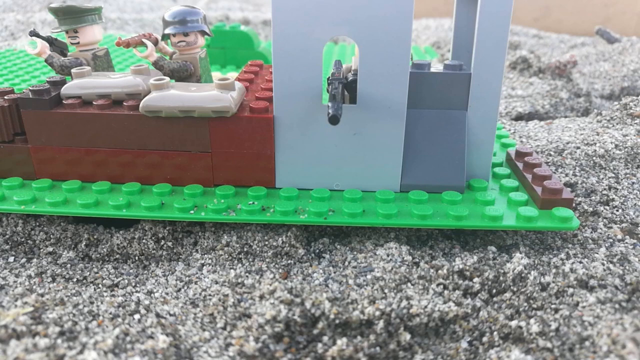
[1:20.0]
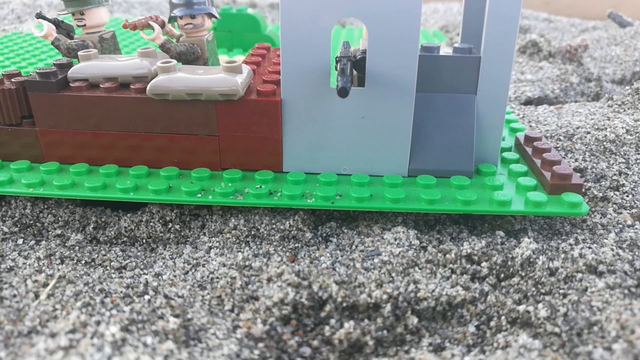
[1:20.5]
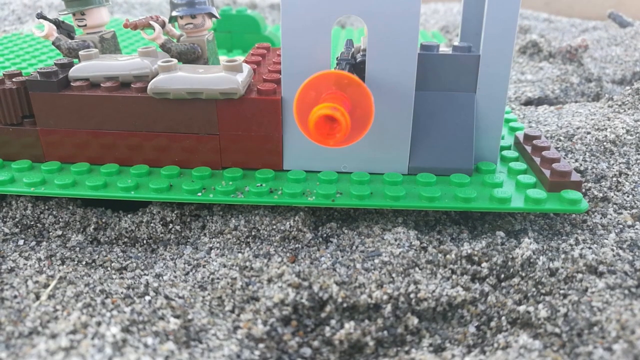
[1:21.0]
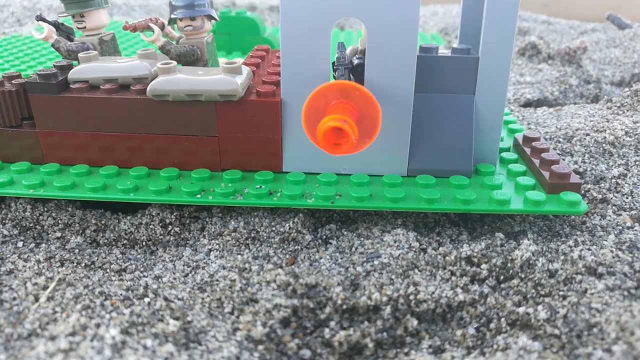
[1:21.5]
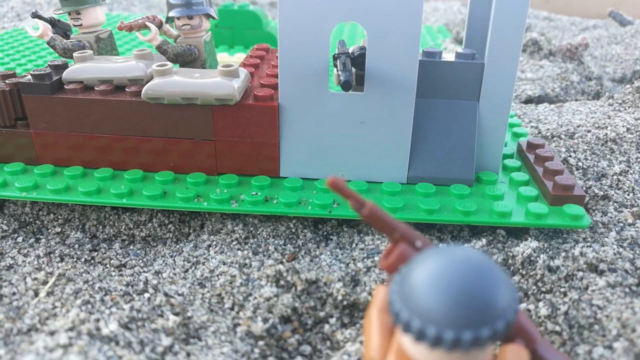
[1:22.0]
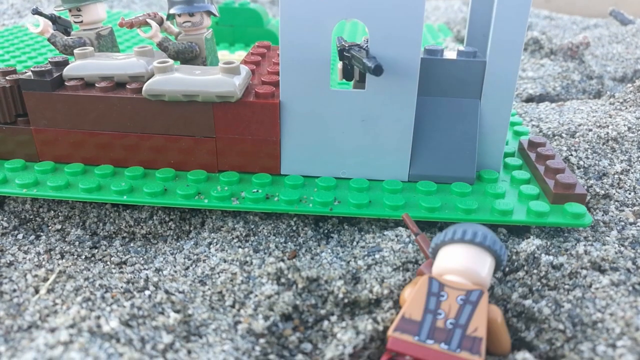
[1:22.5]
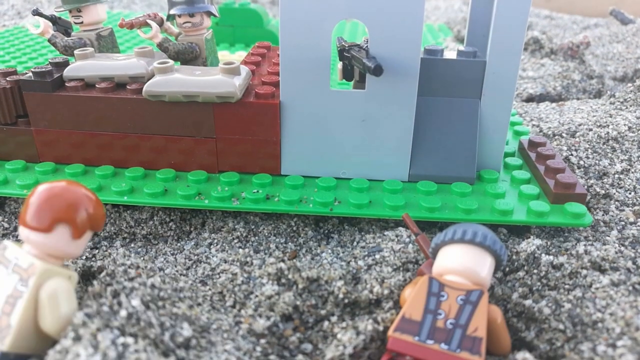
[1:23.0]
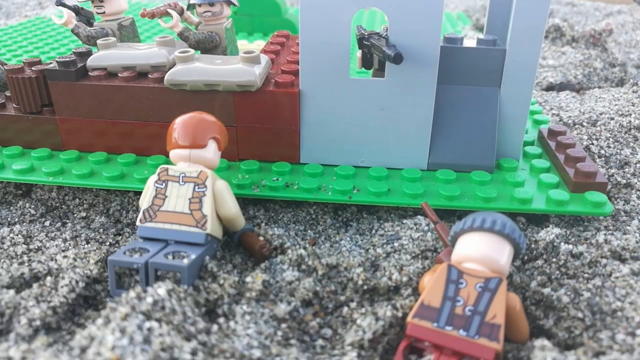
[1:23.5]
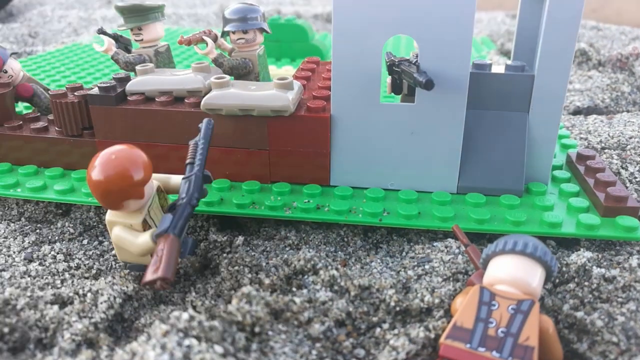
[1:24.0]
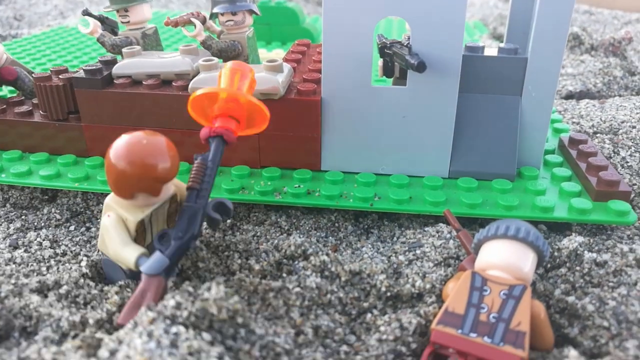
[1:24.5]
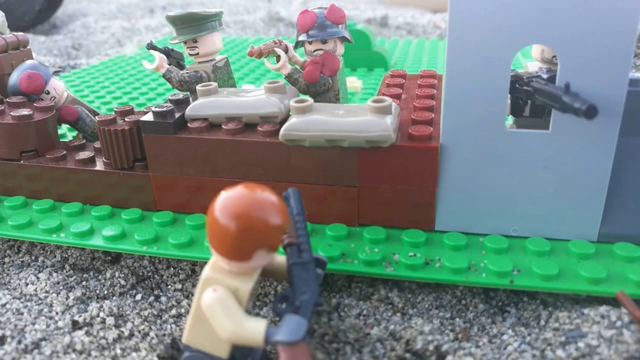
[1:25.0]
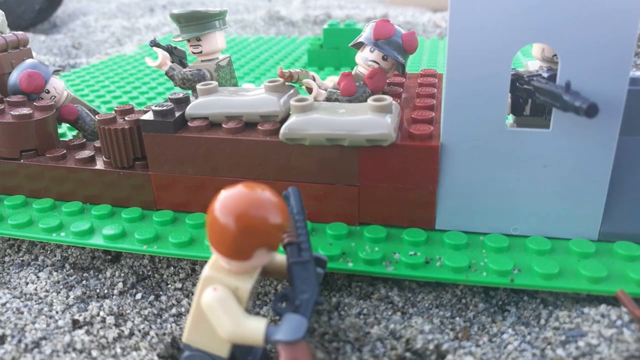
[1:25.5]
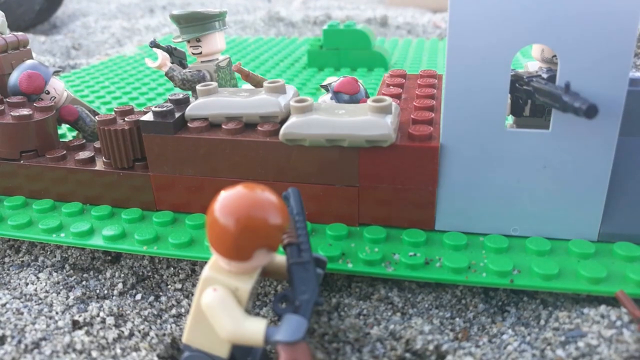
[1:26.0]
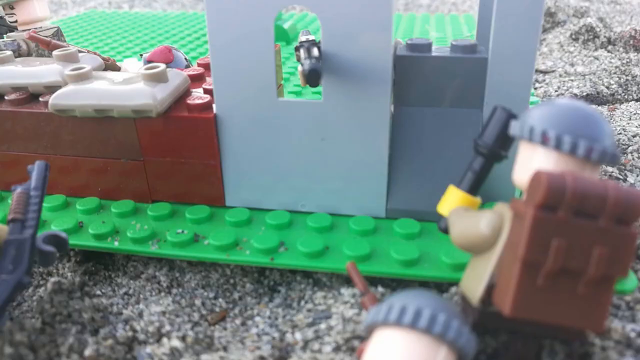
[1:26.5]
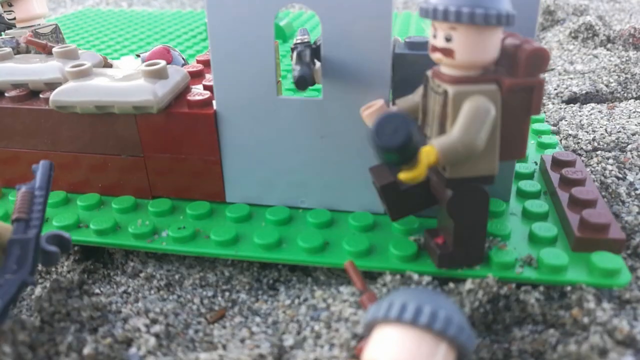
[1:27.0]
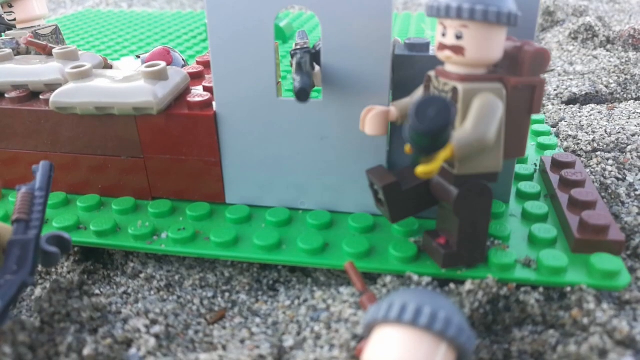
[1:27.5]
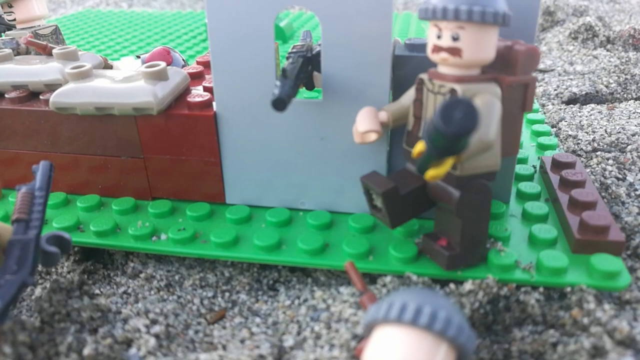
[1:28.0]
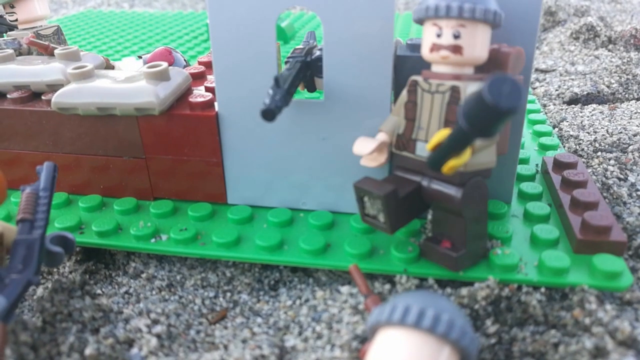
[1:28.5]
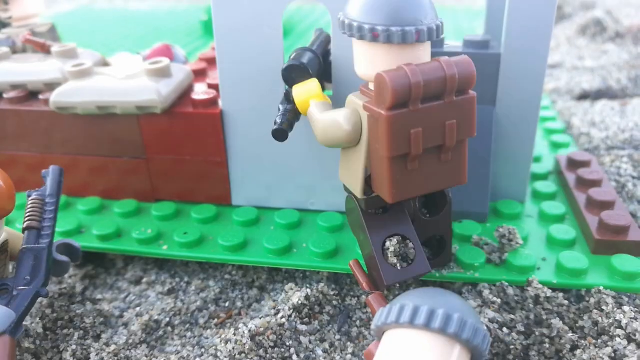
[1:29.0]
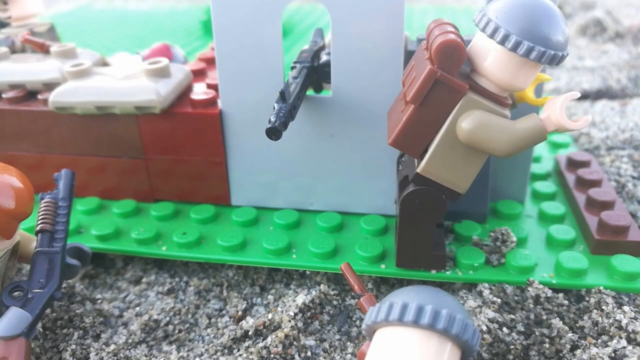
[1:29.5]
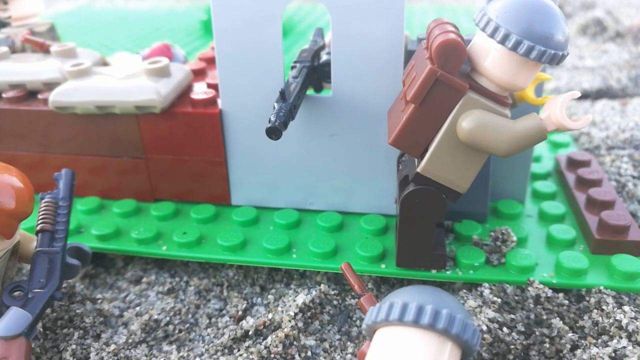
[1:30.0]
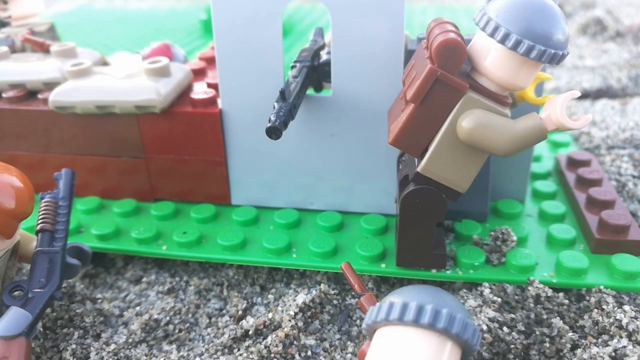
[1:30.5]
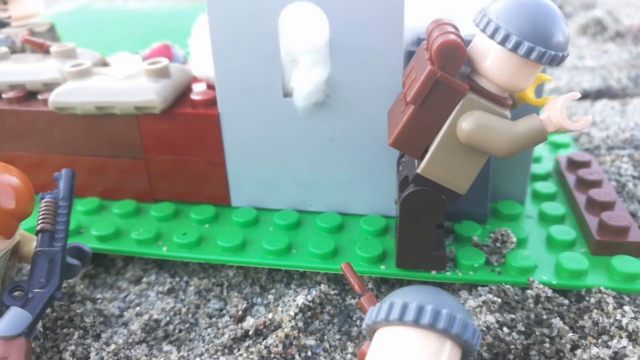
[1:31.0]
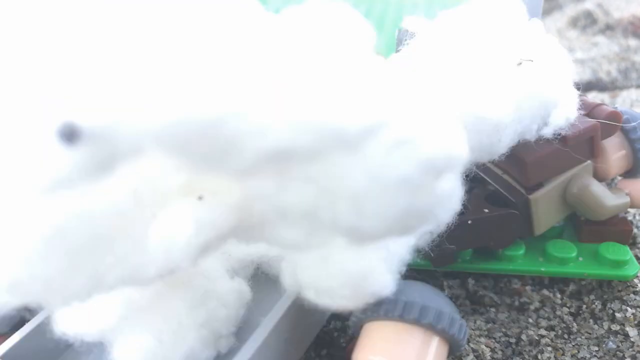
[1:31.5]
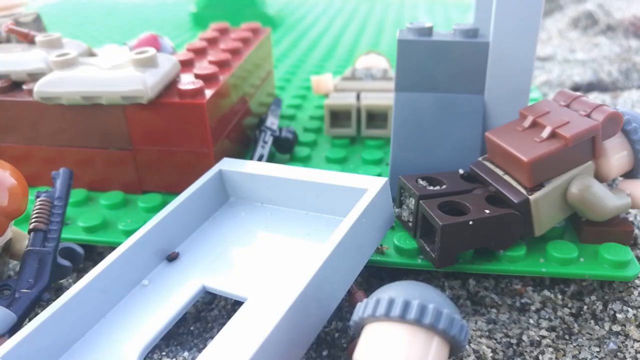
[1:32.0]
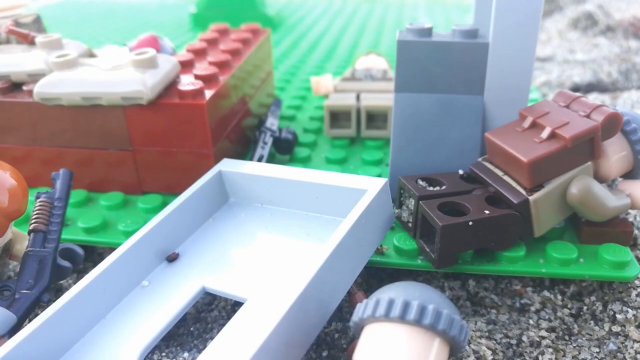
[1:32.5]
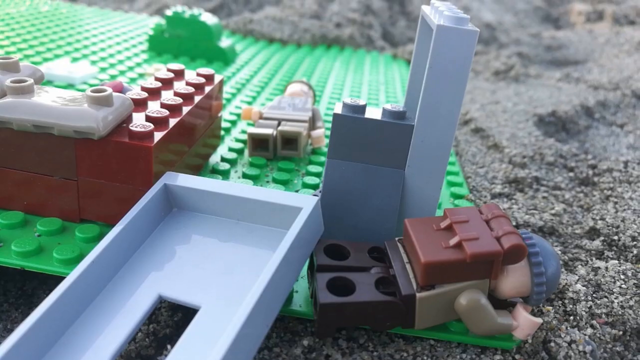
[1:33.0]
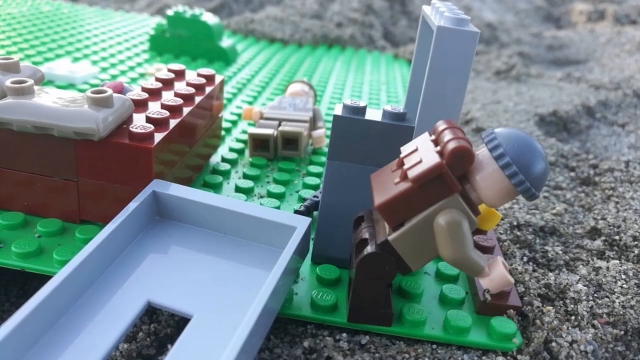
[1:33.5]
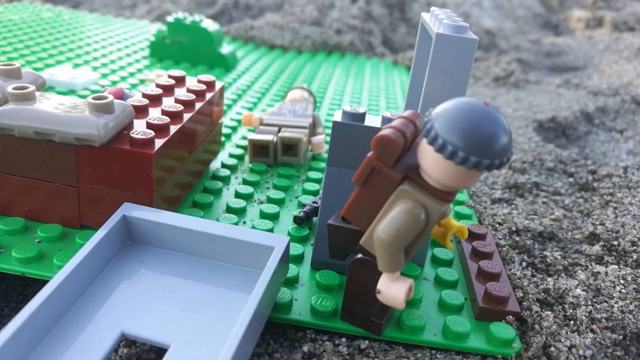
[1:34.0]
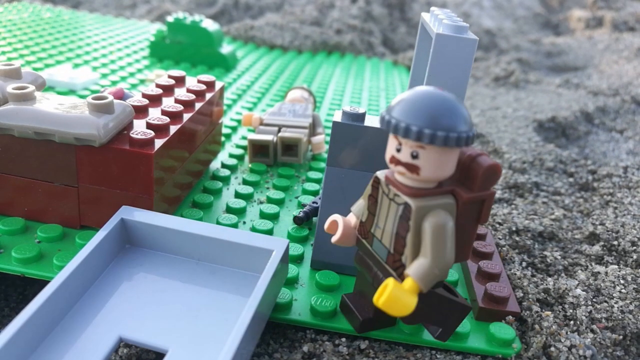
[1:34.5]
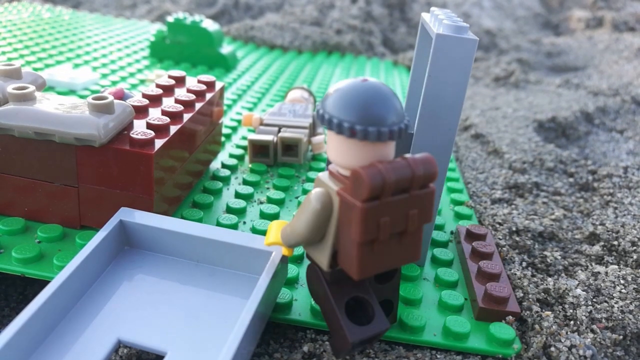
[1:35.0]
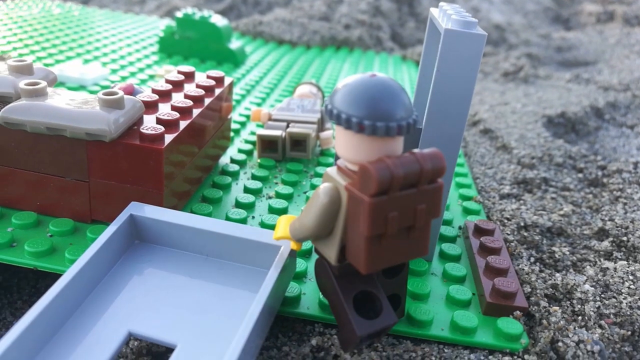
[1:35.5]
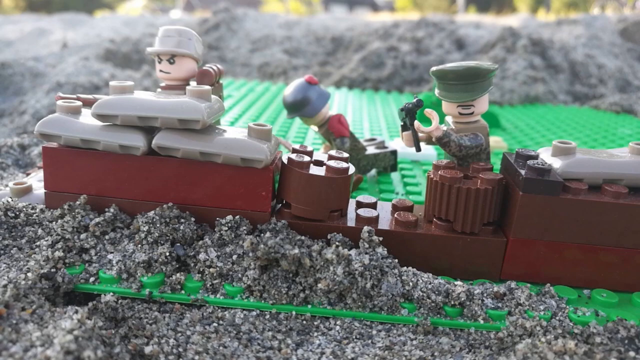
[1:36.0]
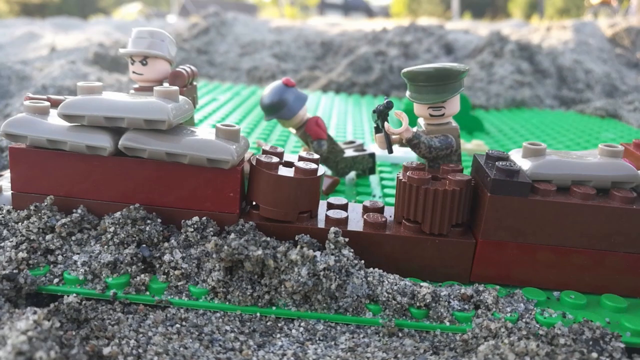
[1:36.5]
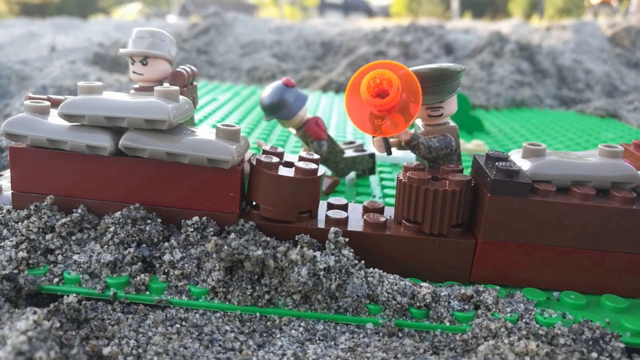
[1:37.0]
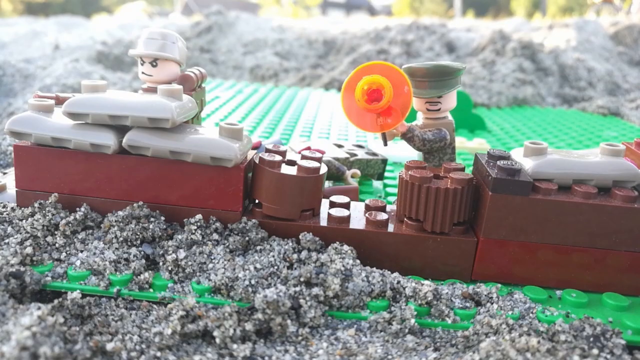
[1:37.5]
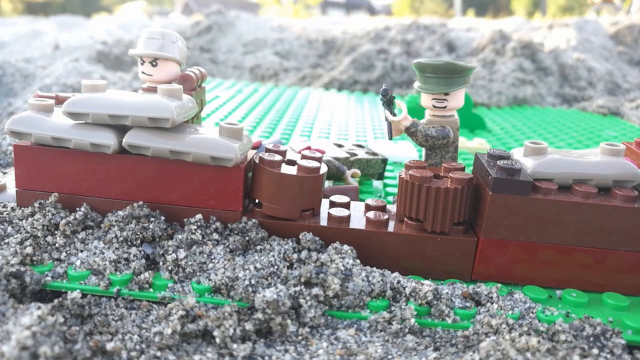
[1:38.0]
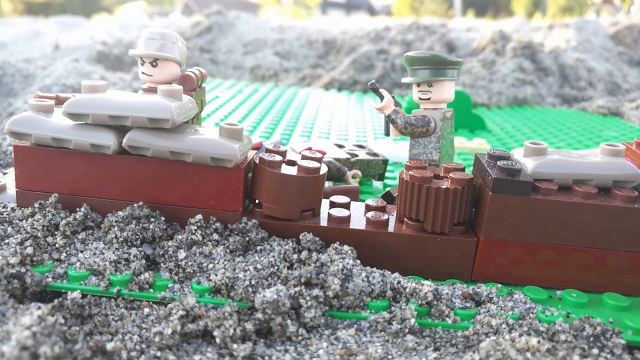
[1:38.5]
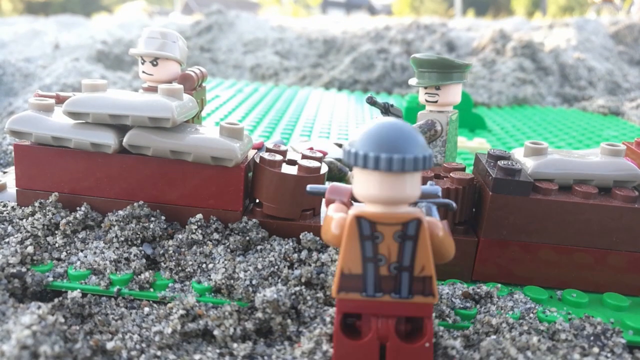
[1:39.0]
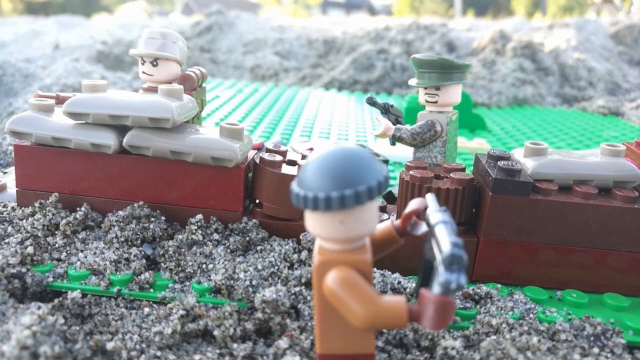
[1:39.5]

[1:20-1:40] The Germans are in their bunker, which is more like a little fort. It has red or orange-brown LEGO walls with sandbags on them and a taller grey section with an arrow slit or gun port. The Germans man the ramparts and fire their guns, but the attackers are right at the foot of the walls. Another German goes down, and an explosion, apparently a grenade or blasting charge, sends up a big puff of grey smoke. An explosive is thrown into the fort and blows the tower to pieces. Firing continues, and it looks like it is all over for the Germans now that the fort has been breached. The three Germans in the little fort have all been dispatched, the fort is blown up, and it looks like the Americans are winning this section of the front.